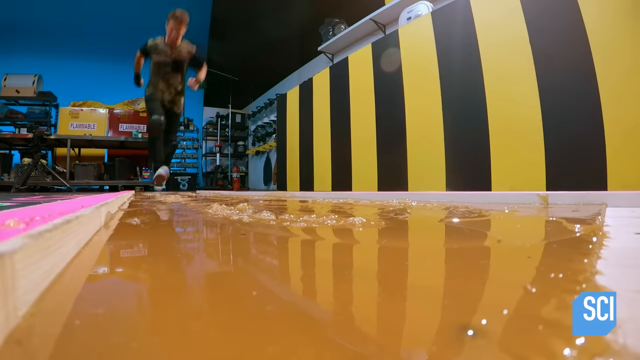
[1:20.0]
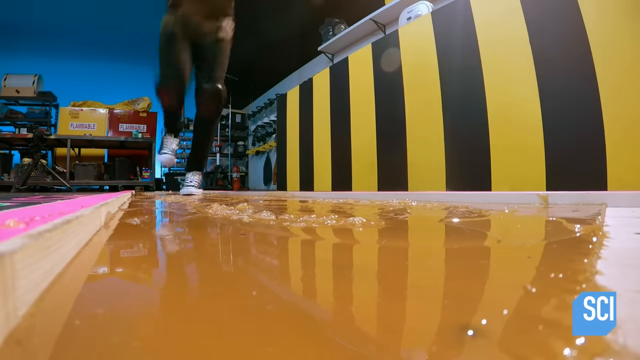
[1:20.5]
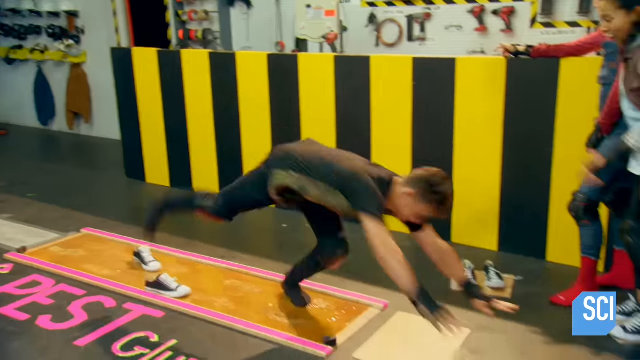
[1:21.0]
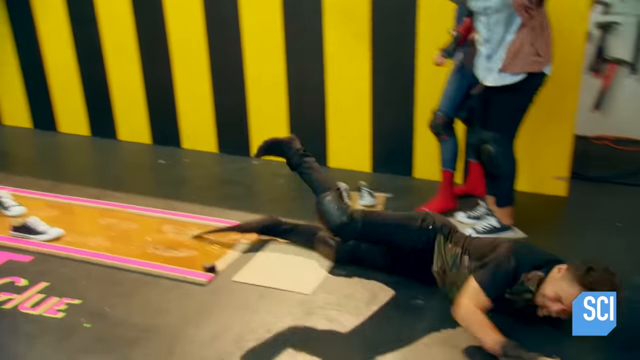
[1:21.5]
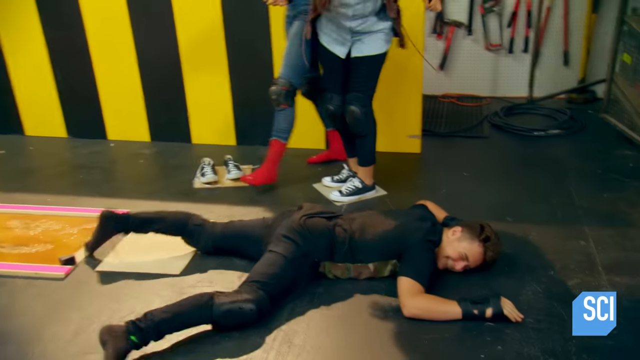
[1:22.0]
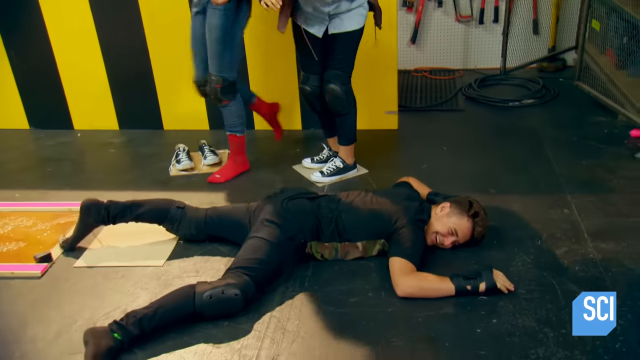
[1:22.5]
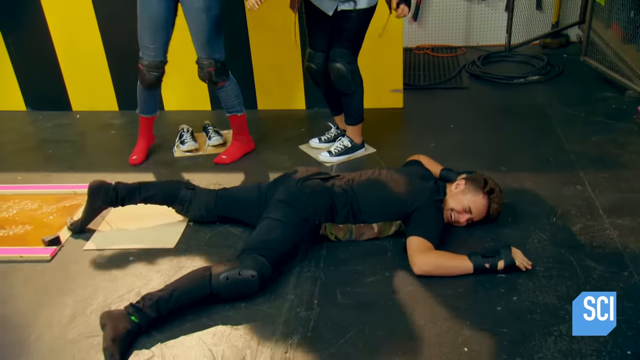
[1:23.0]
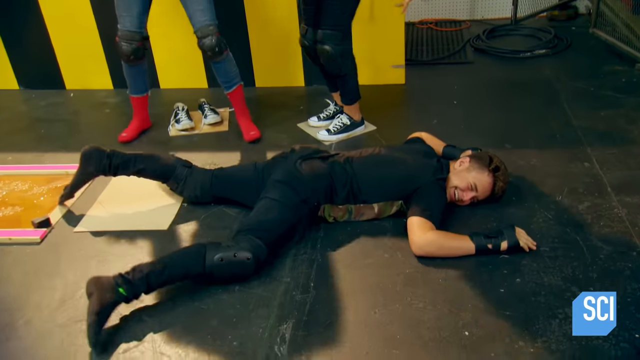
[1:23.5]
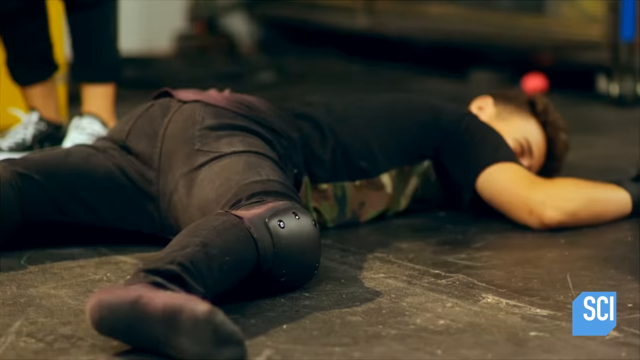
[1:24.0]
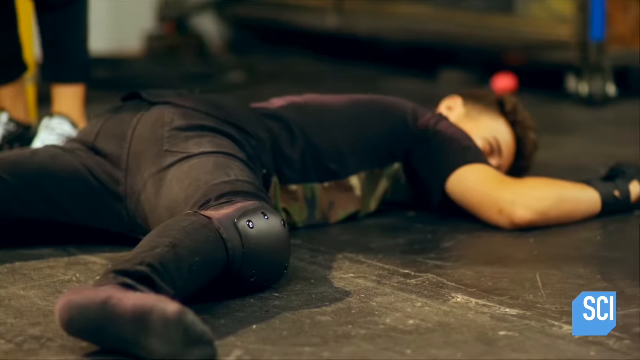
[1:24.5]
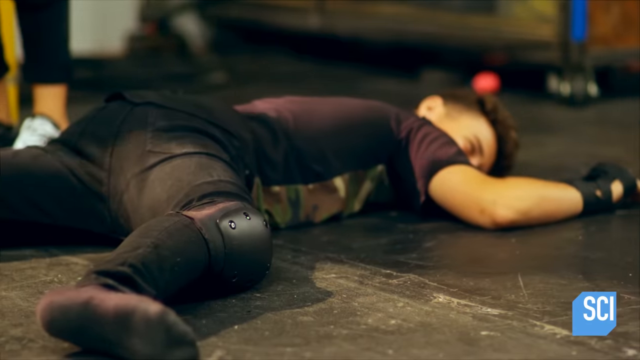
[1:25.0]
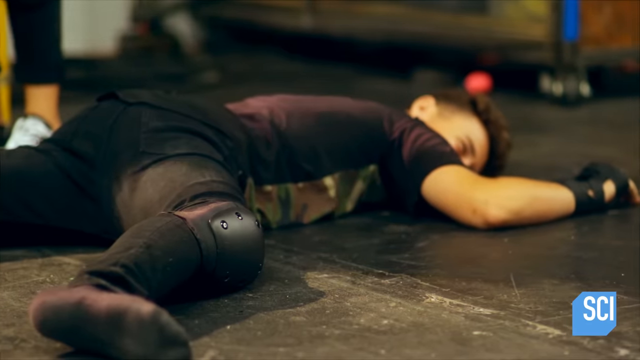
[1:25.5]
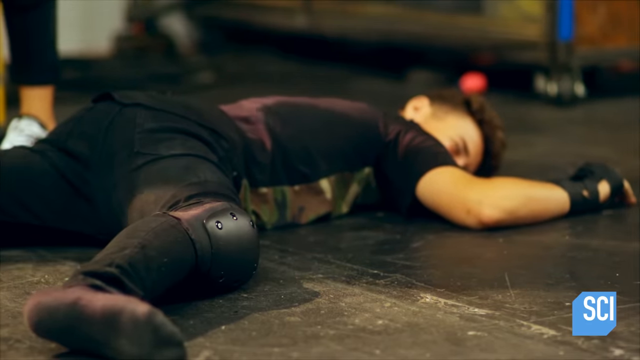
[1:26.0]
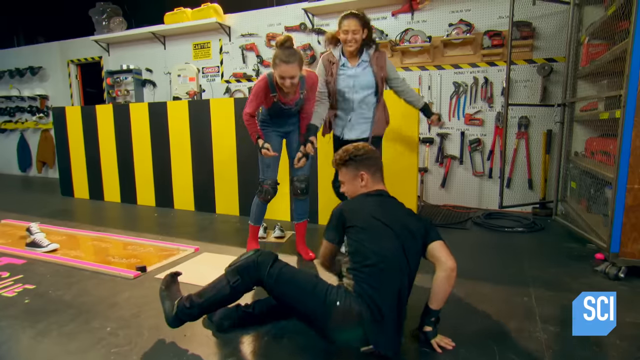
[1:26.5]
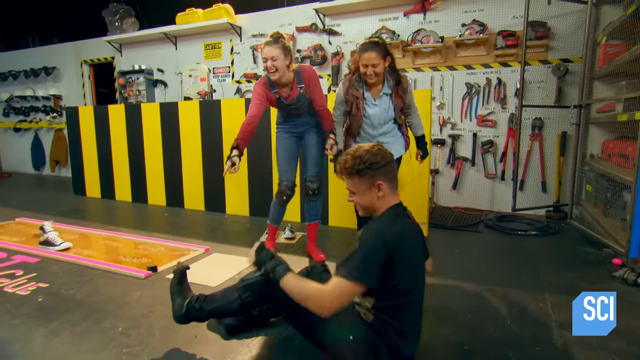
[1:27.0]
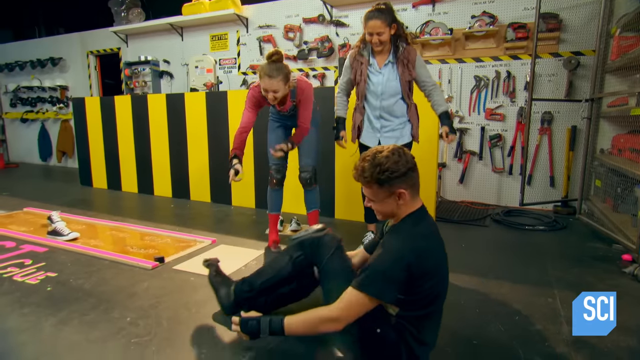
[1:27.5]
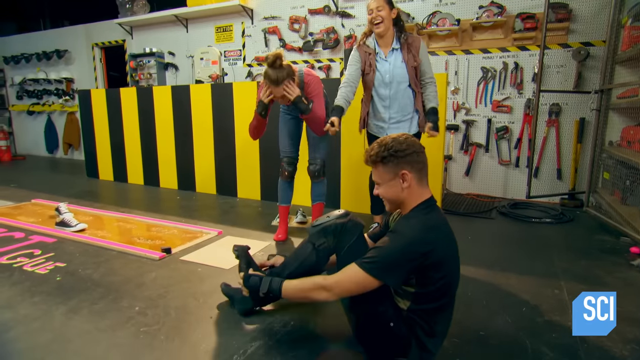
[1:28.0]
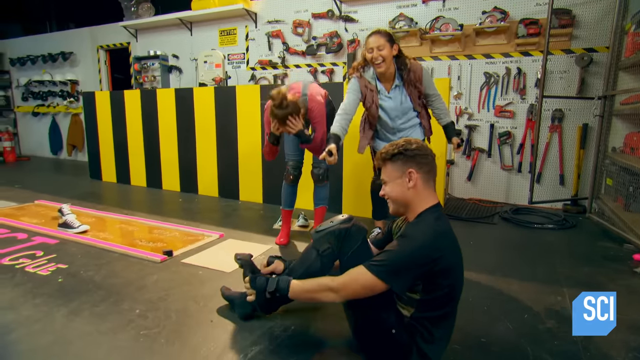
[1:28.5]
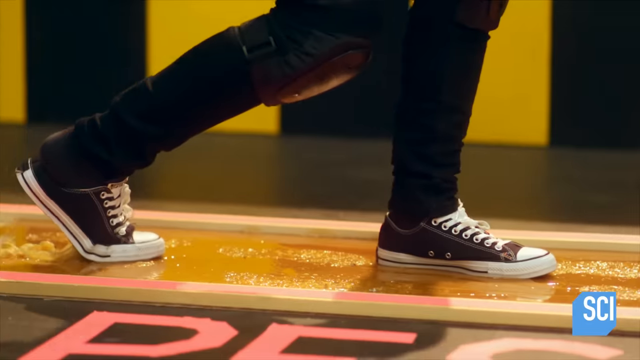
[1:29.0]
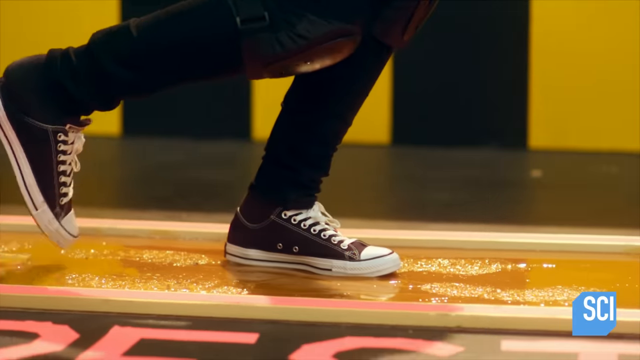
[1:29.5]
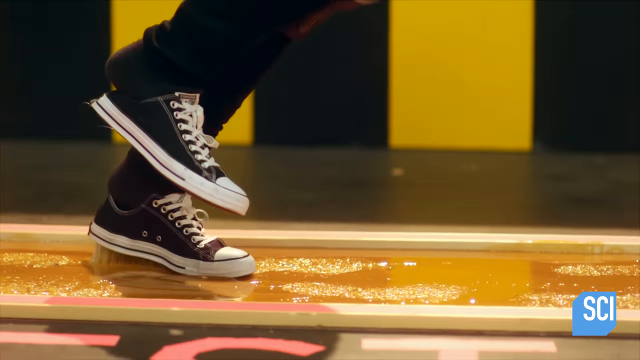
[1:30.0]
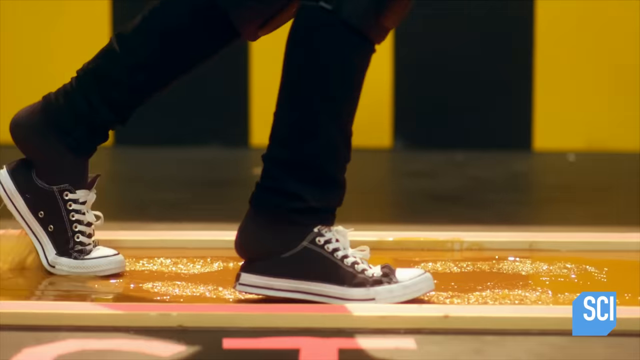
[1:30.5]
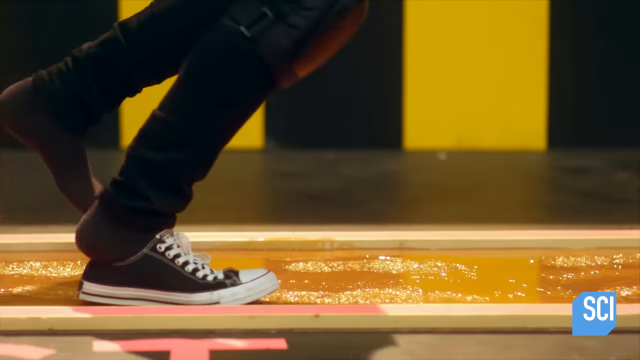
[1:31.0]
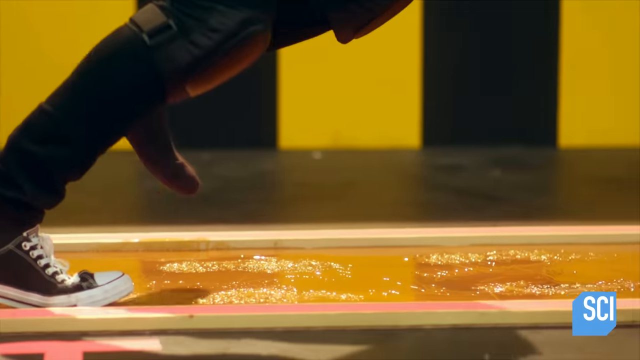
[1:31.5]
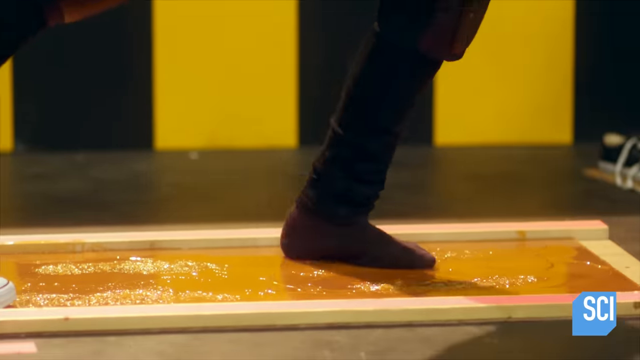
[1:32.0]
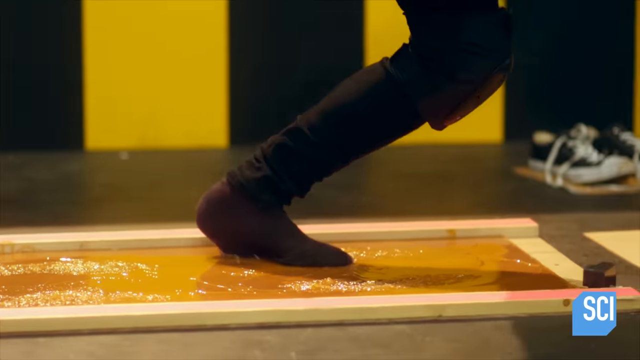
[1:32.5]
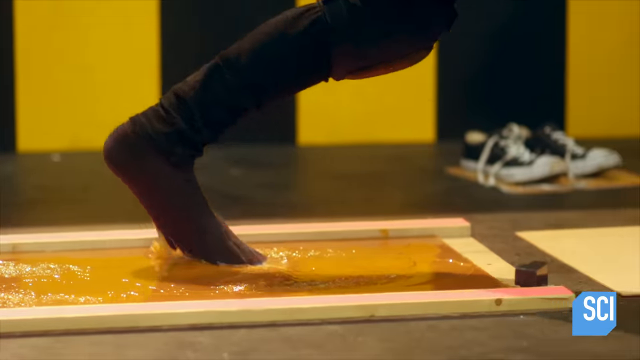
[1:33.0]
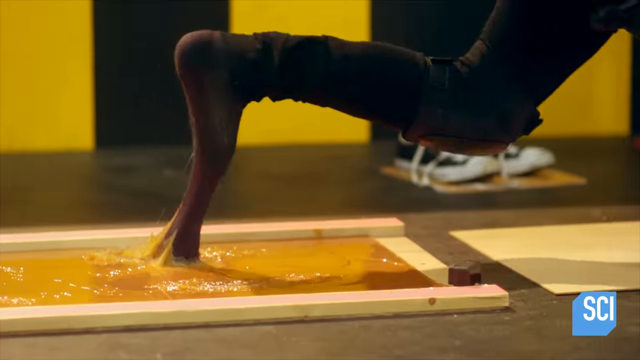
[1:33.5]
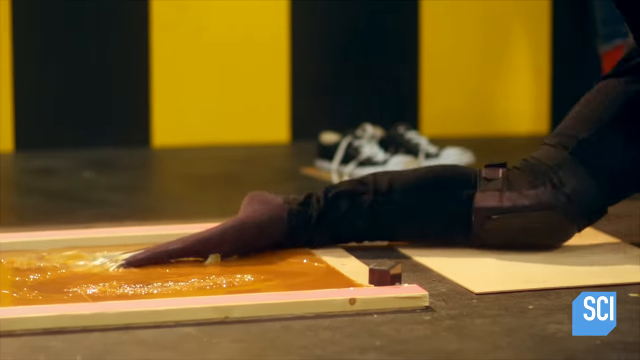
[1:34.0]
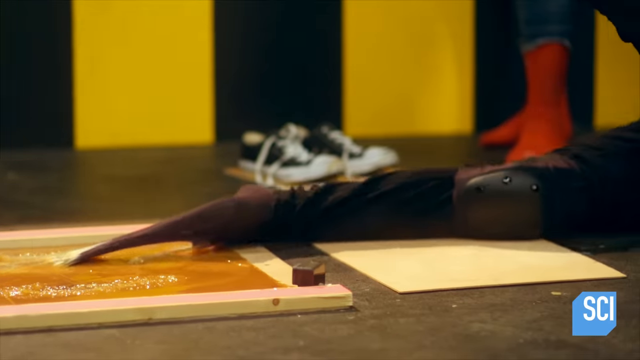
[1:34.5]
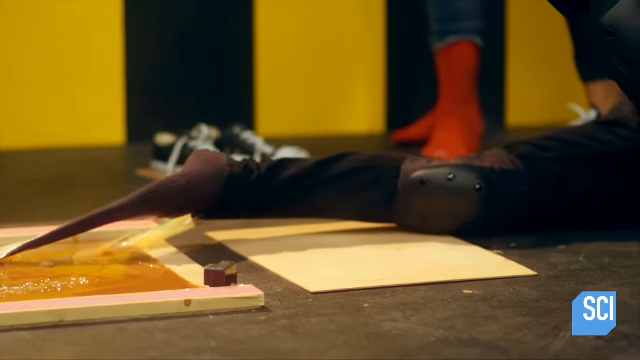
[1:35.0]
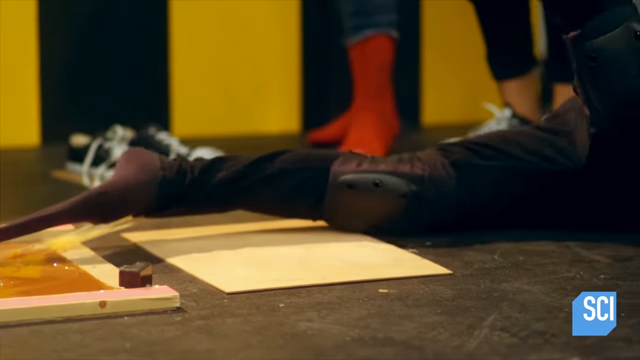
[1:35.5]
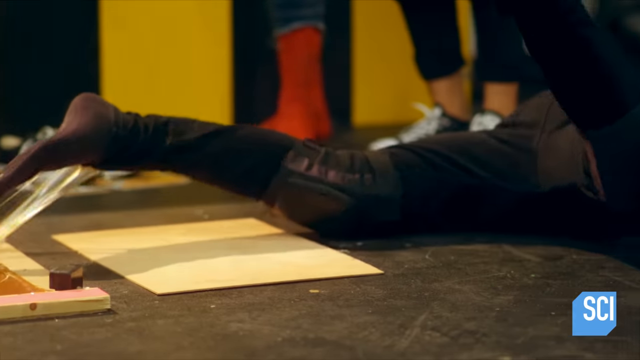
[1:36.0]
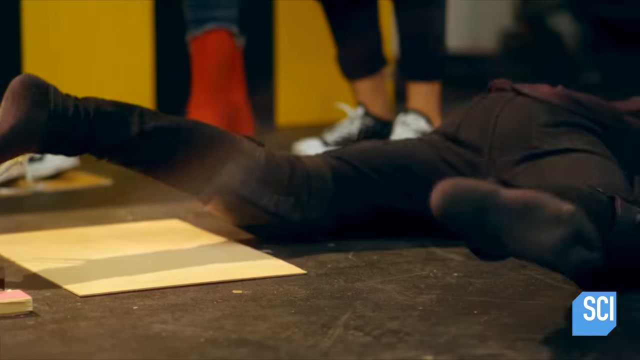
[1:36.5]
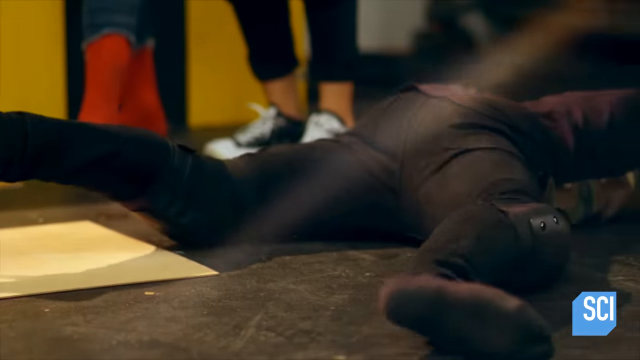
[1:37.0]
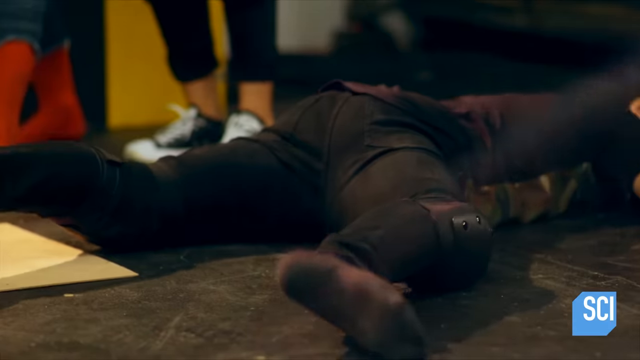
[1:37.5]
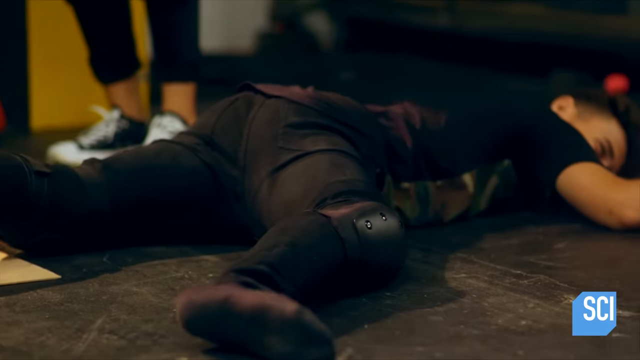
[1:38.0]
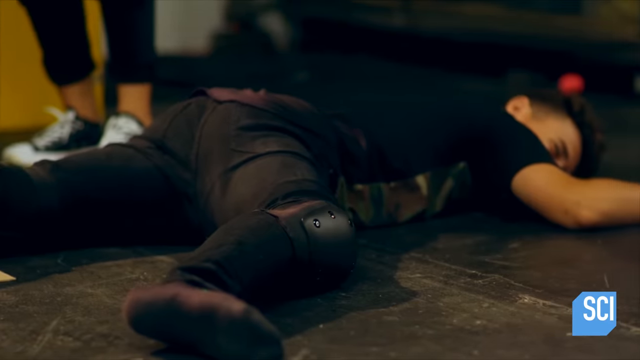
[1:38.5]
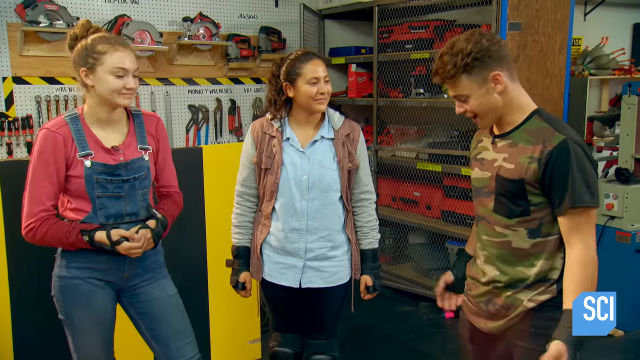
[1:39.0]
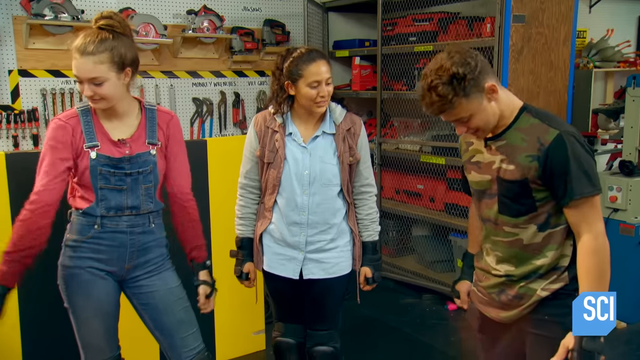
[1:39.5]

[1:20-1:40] The young man stands at the top of the strip laid on the ground and begins to walk and run forward. He has on black jeans and a black and camouflage shirt, and in the shot that follows a cut he is wearing knee pads and wrist pads, with no other protective equipment. He has a short, tight haircut and is white. He pulls both arms back down at his sides and prepares to run. He runs toward the strip of glue, taking several steps on the ground before reaching it. With his first step onto the glue, the camera moves in for a close-up. His left sneaker catches on the glue; he quickly steps down with his right, and the glue catches that as well. Both of his shoes come off, and he takes the next step in his socks. His socks stick to the glue, causing him to trip and fall off the panel of glue onto the floor in front of it, with his left foot still stuck on the glue. A replay shows him running and falling, then cuts to him lying on the ground with the two girls laughing and clapping for him behind. He sits up and looks back at the strip behind him, which now has his two shoes attached to it.